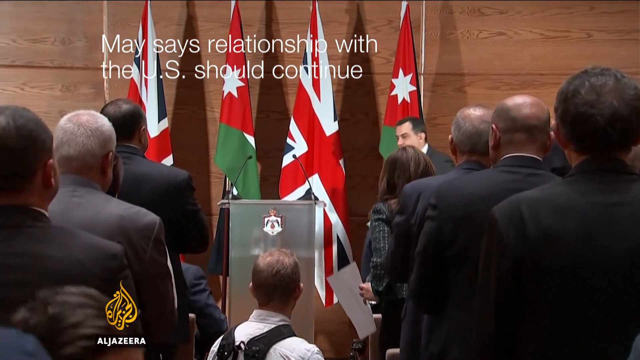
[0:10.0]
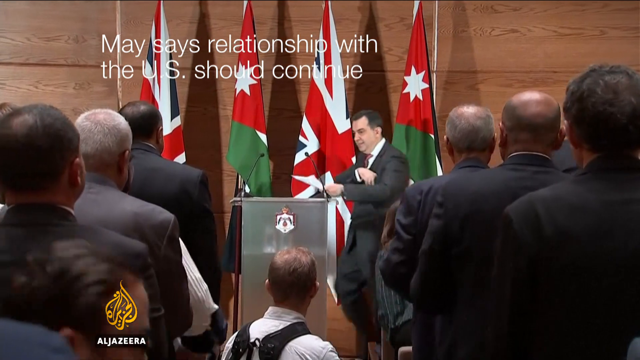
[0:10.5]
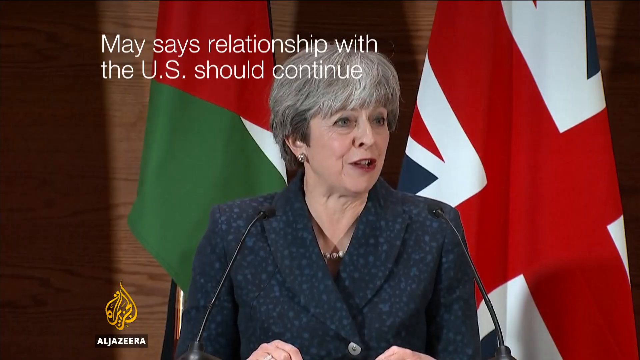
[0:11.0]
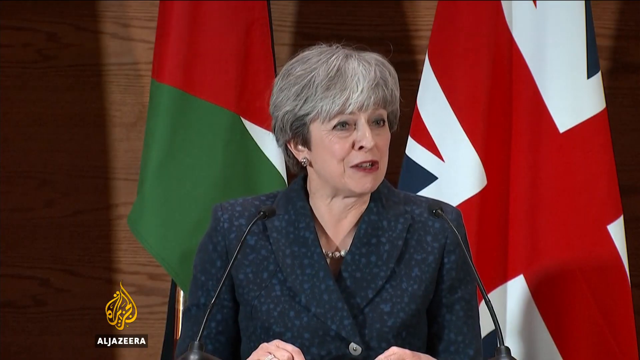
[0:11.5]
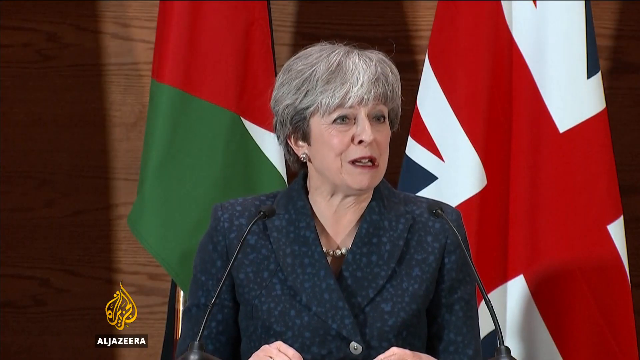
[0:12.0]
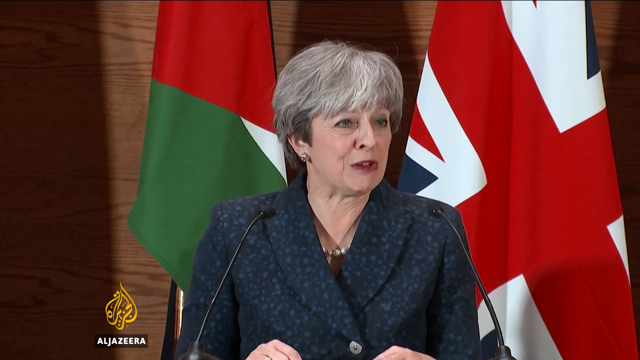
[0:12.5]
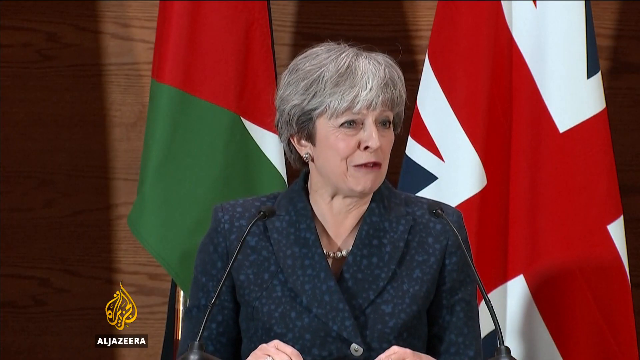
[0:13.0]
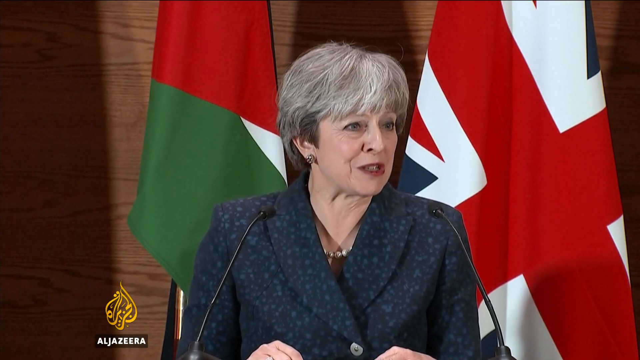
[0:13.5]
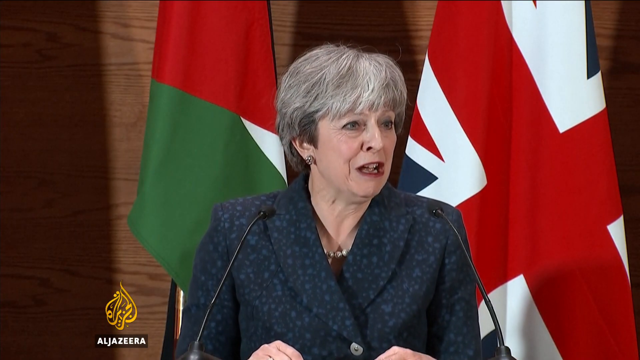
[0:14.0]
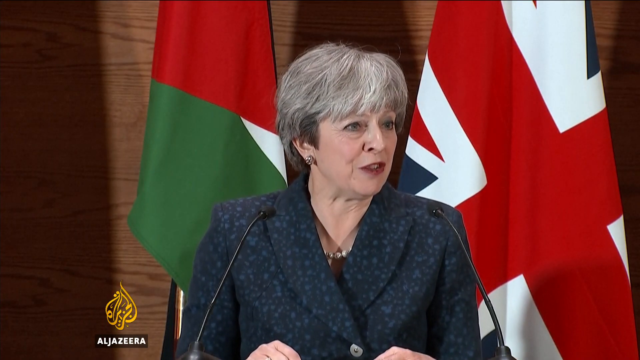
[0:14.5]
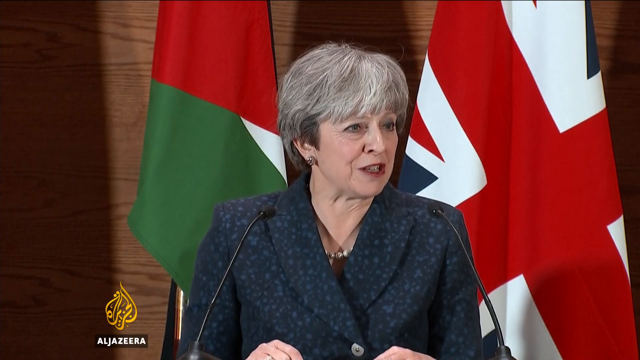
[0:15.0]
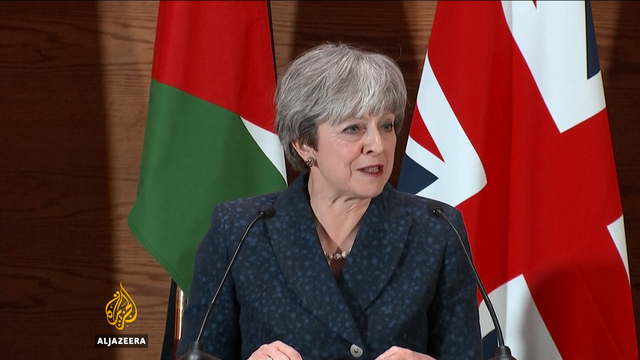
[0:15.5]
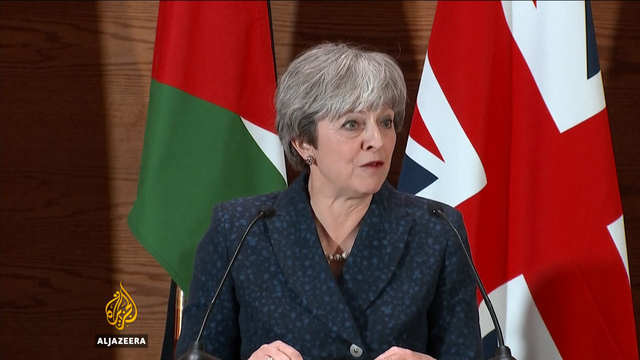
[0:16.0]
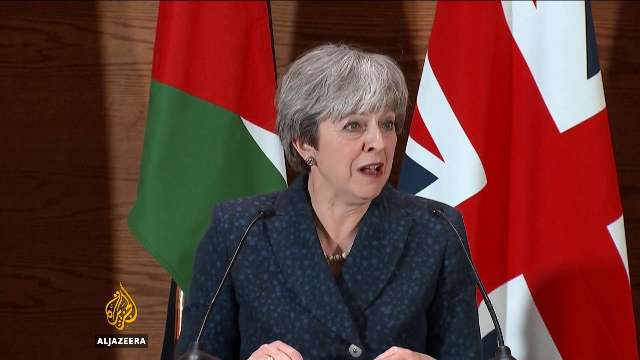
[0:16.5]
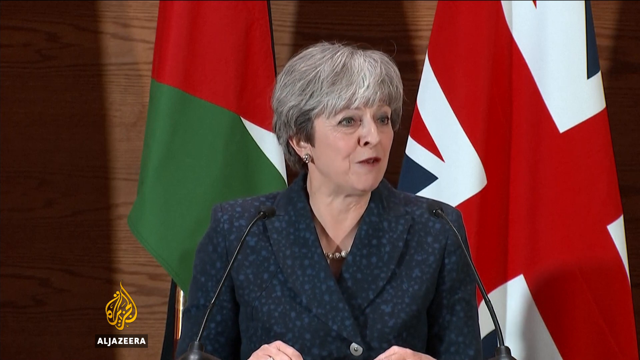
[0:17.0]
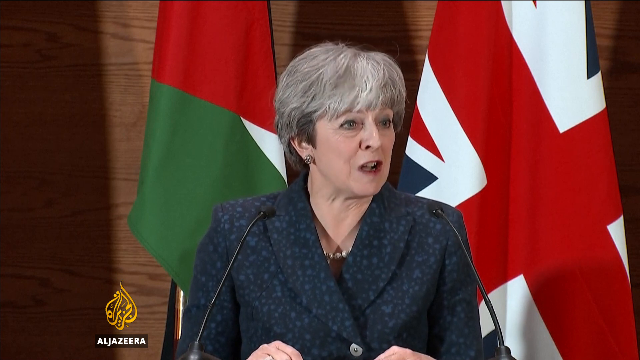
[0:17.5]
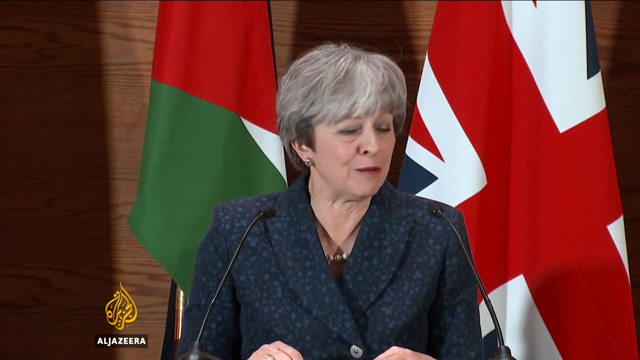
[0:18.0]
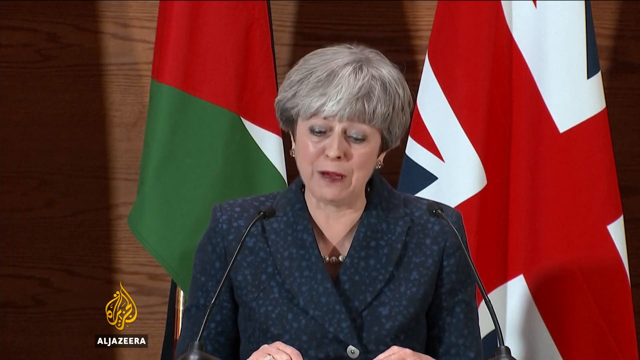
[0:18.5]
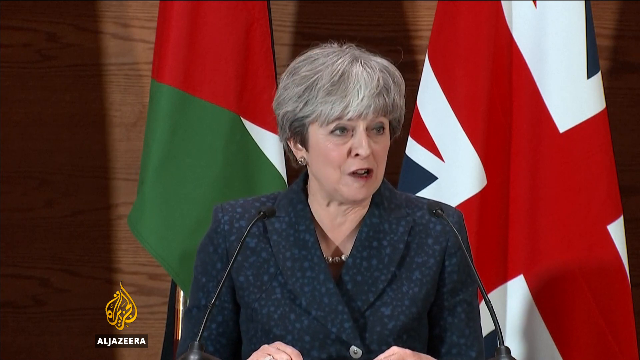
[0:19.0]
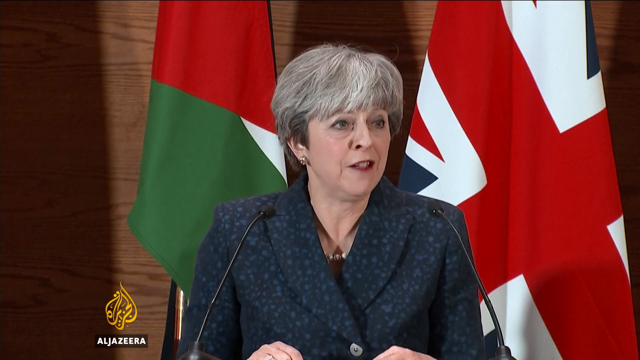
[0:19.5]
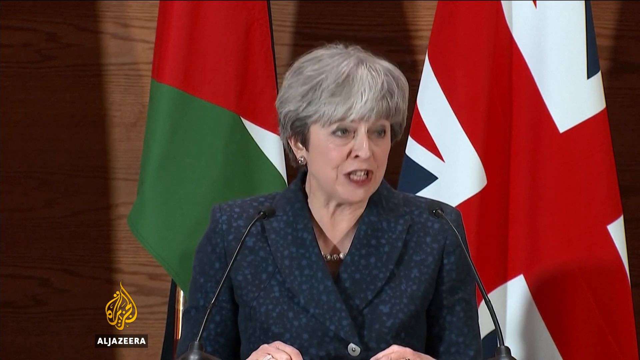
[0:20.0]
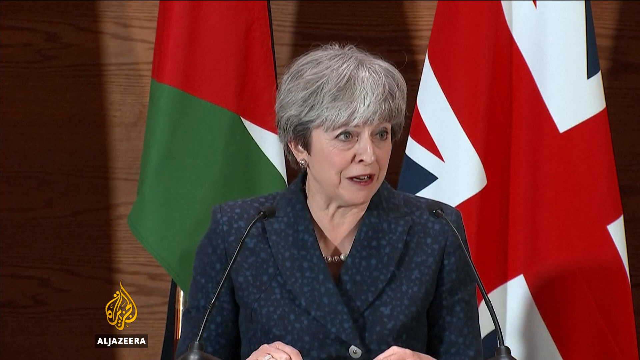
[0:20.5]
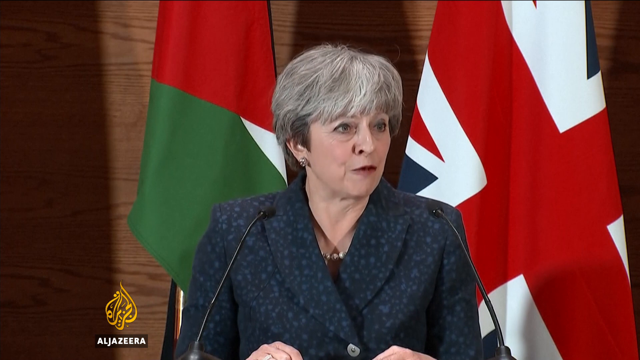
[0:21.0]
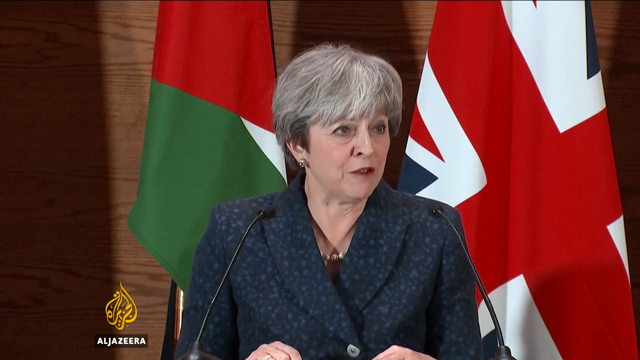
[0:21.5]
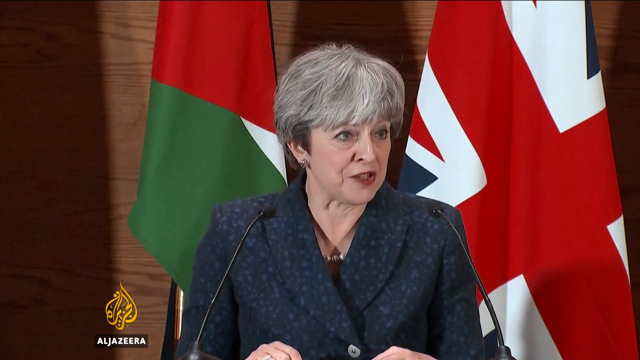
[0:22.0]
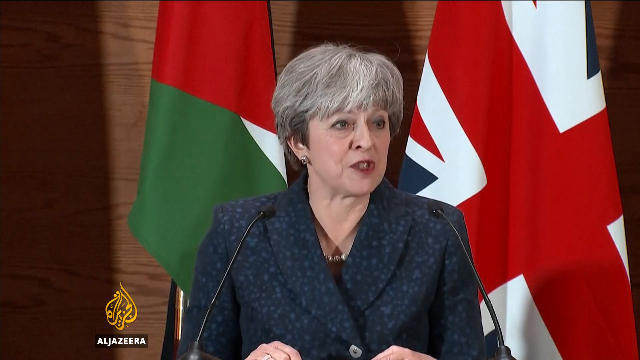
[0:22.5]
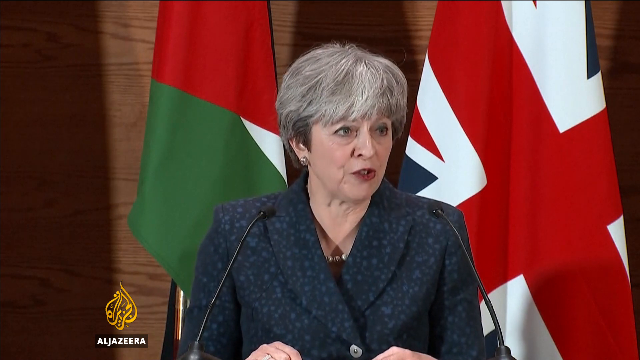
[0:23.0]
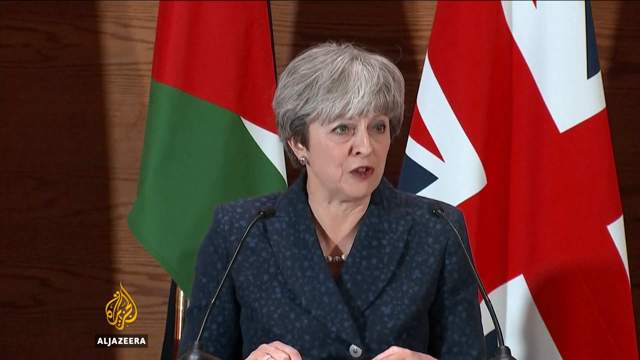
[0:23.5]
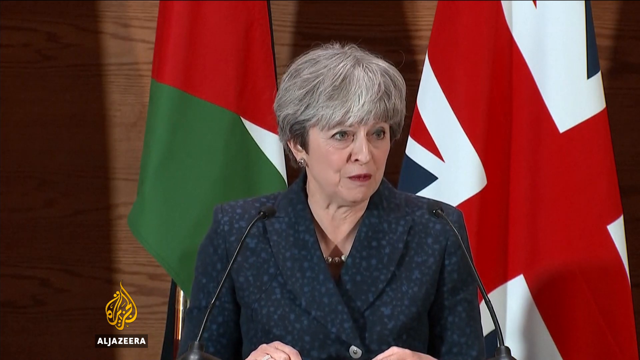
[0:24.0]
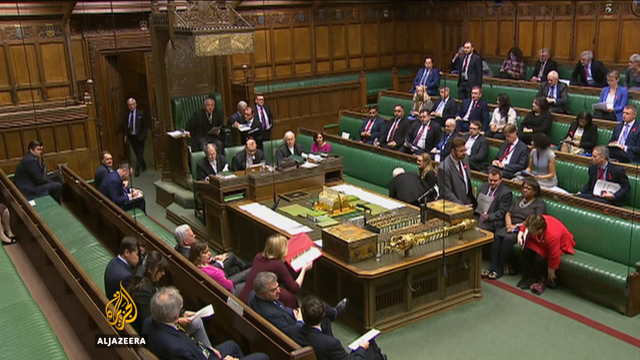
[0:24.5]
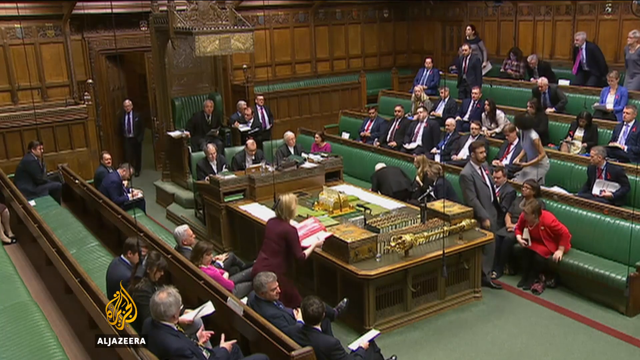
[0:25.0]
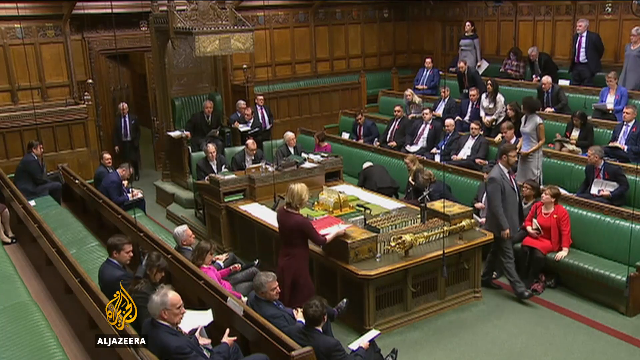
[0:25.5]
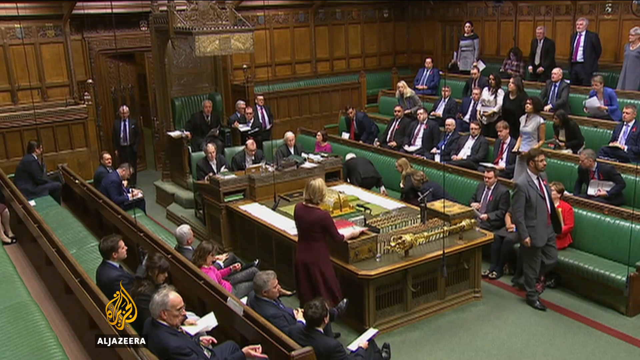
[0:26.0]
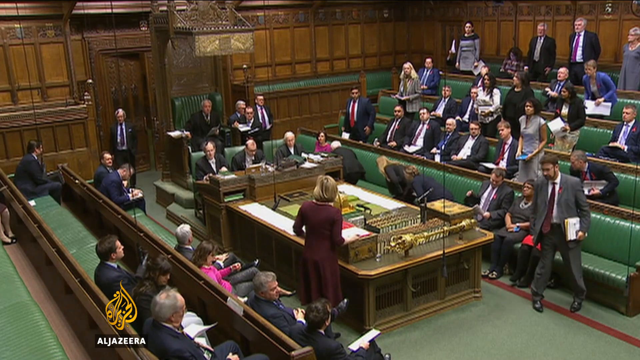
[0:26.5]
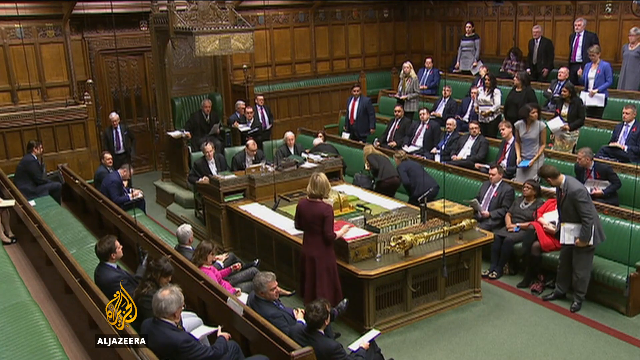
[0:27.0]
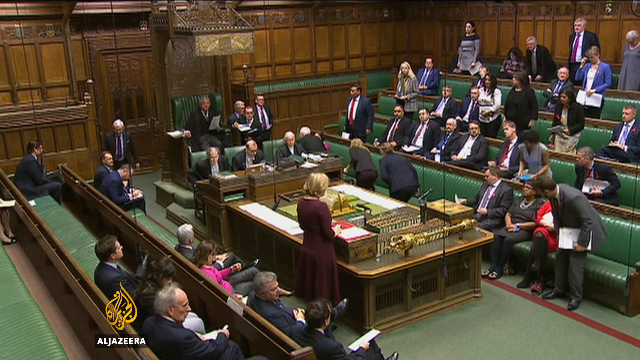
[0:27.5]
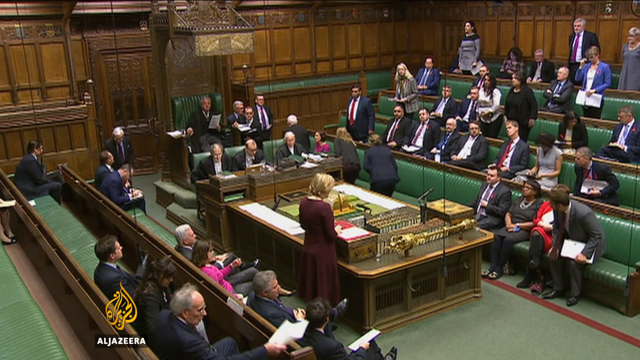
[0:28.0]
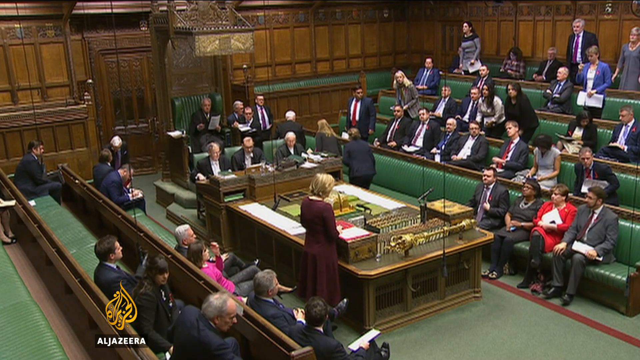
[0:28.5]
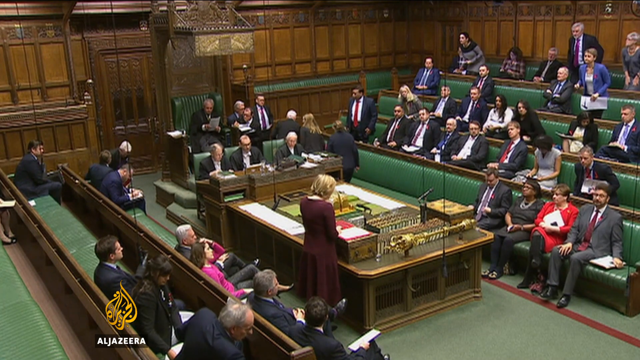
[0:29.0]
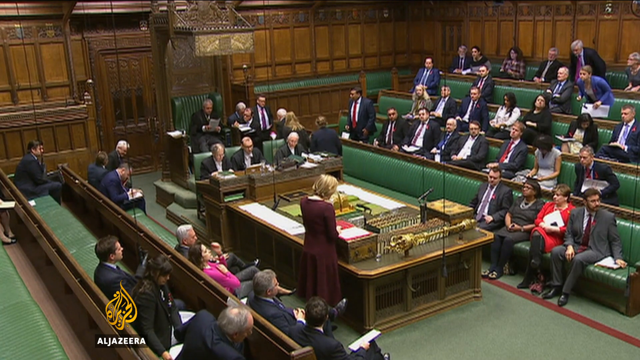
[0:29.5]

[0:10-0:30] The camera, at the back of the room, faces the center of the room toward a small podium. A gray banner hangs vertically off the front of the podium, and the microphone is situated toward the right side of it. Four British flags are set up directly behind the podium. The shot then changes to a close-up of Theresa May, the Prime Minister of Great Britain, an older woman with short gray hair wearing a blue suit. She looks toward the right side of the room as she speaks; she looks like she is speaking forcefully, shaking her head and nodding aggressively. The screen then transitions to a Parliament session: the camera is mounted high in the right corner of the room, pointed down at lawmakers seated on green benches.